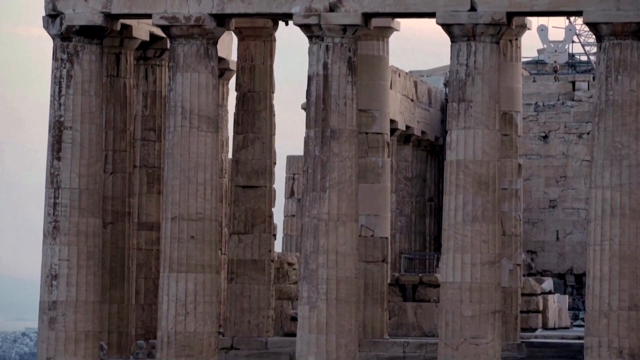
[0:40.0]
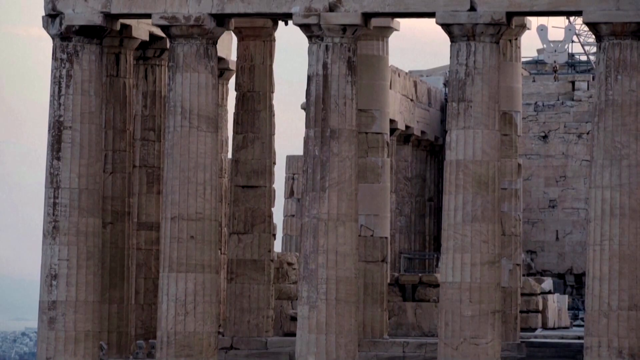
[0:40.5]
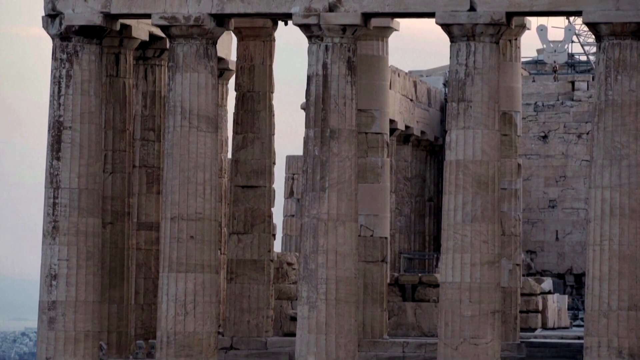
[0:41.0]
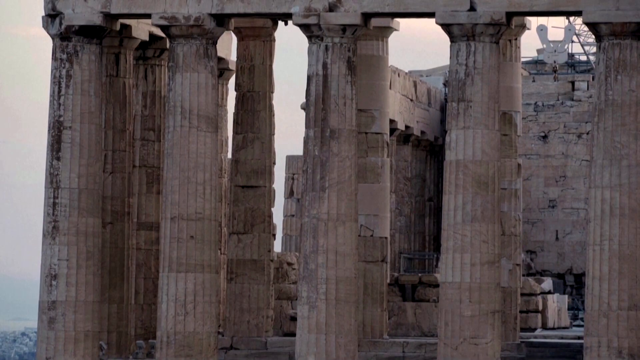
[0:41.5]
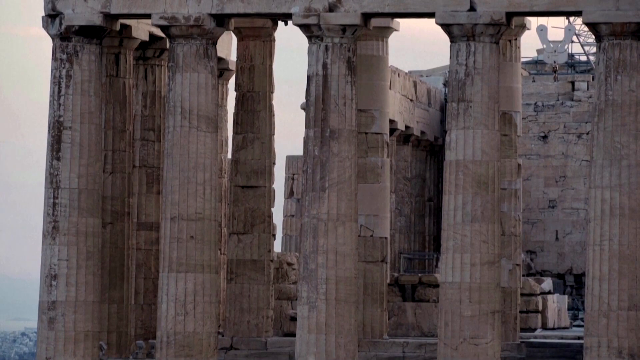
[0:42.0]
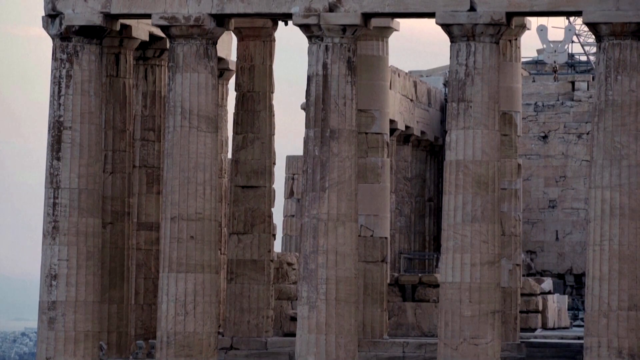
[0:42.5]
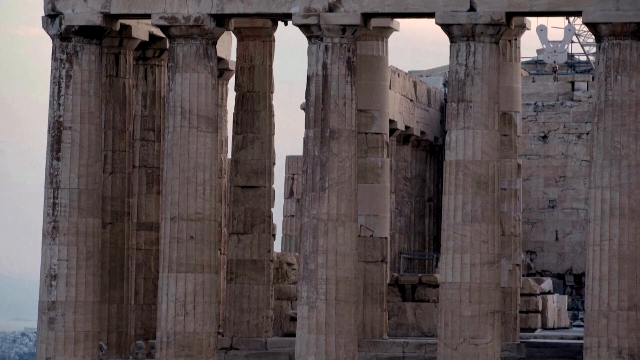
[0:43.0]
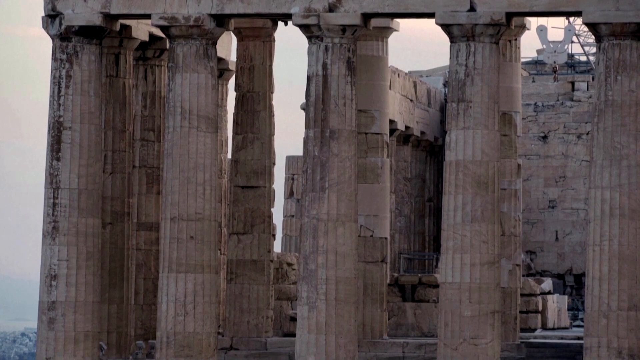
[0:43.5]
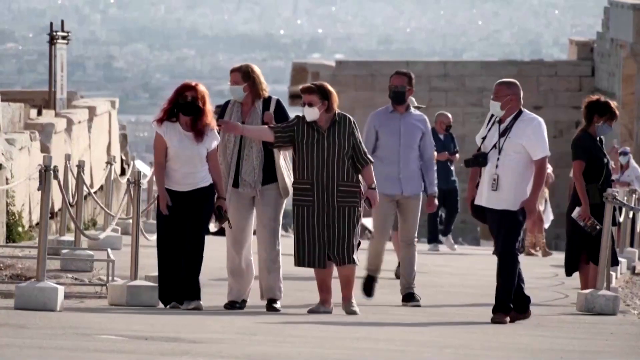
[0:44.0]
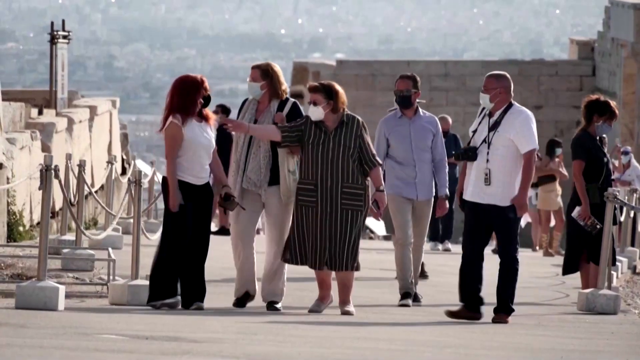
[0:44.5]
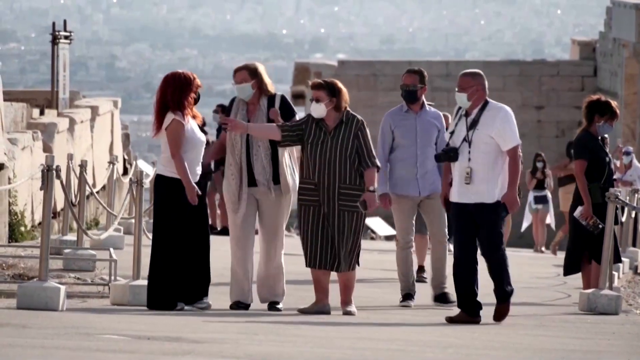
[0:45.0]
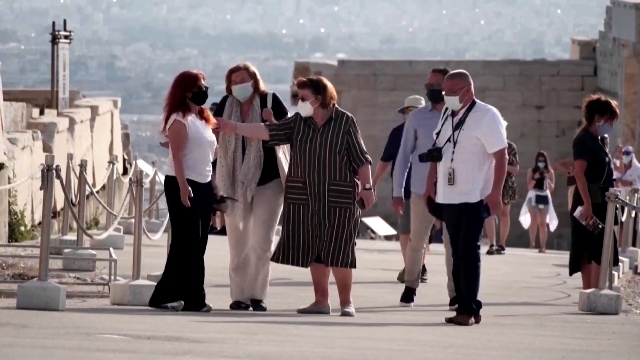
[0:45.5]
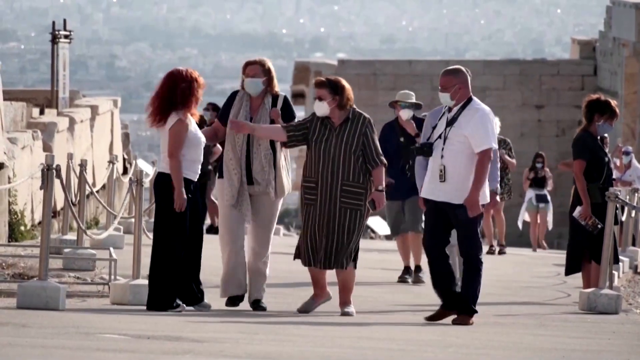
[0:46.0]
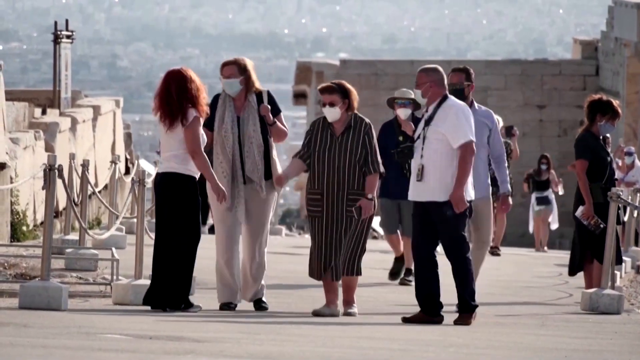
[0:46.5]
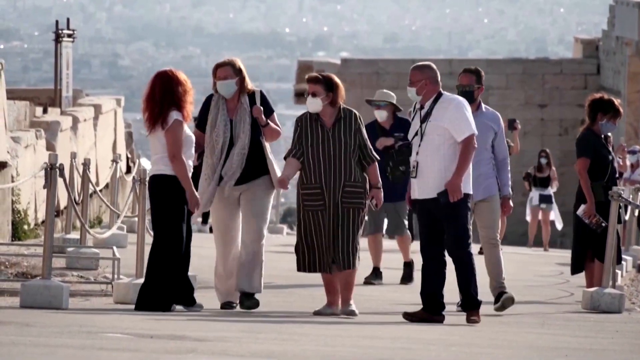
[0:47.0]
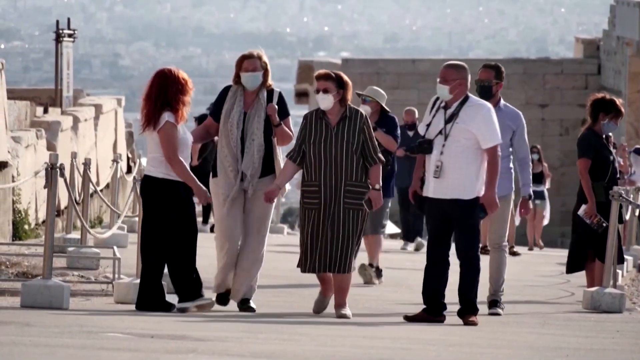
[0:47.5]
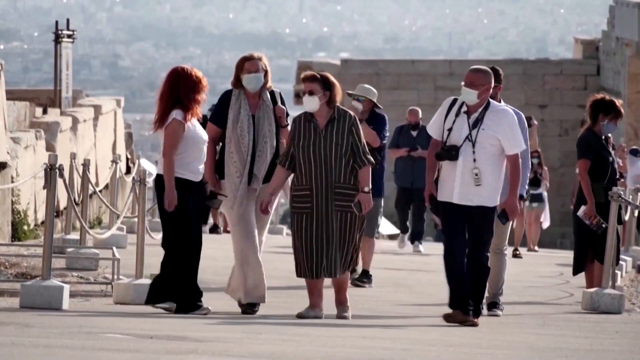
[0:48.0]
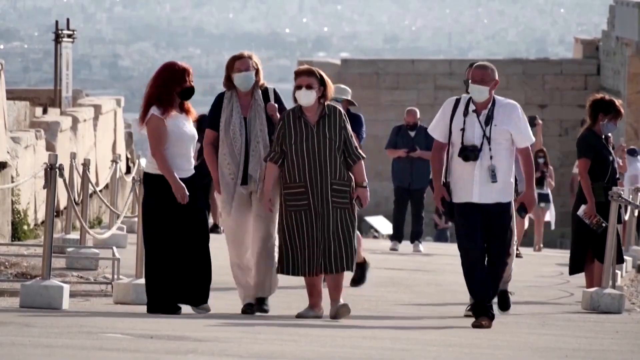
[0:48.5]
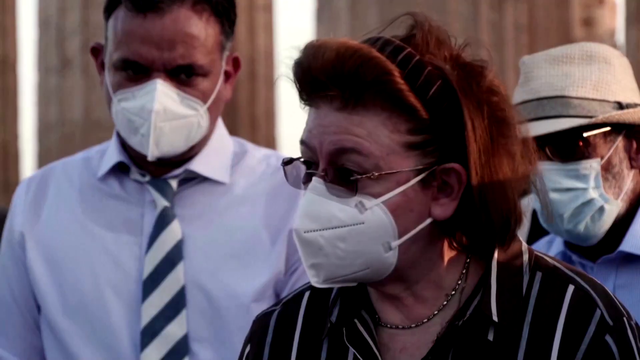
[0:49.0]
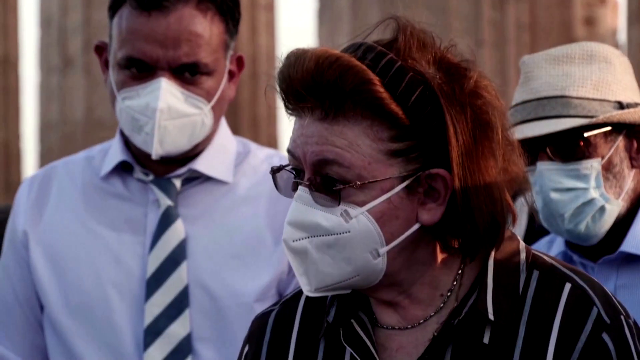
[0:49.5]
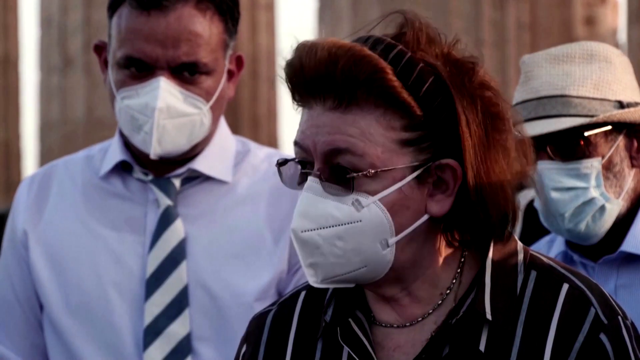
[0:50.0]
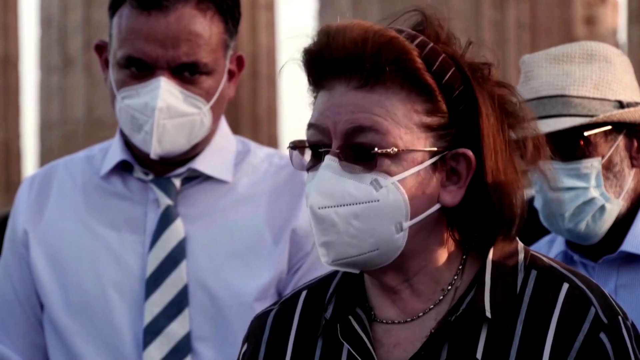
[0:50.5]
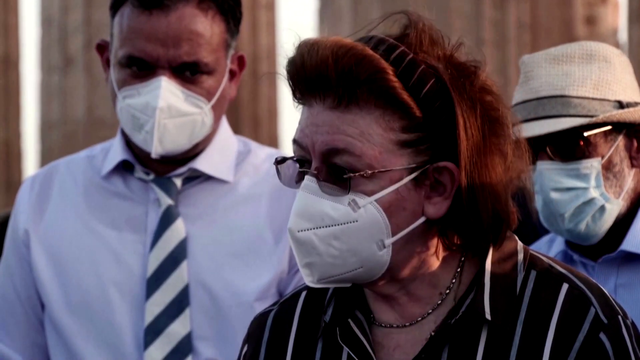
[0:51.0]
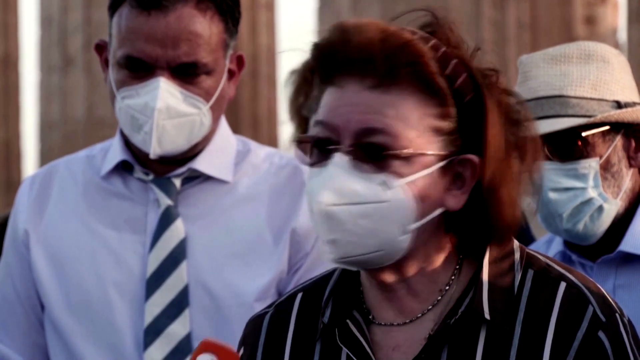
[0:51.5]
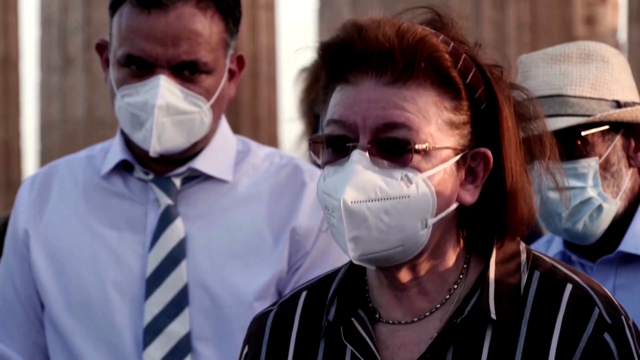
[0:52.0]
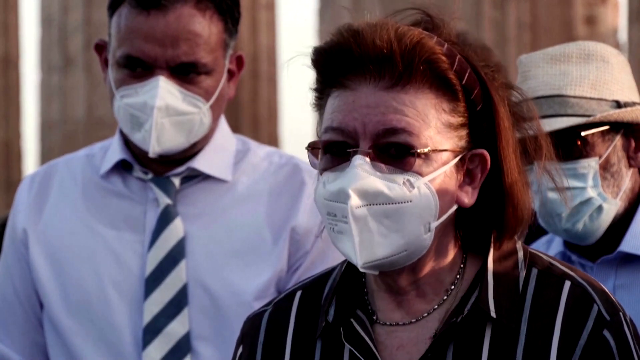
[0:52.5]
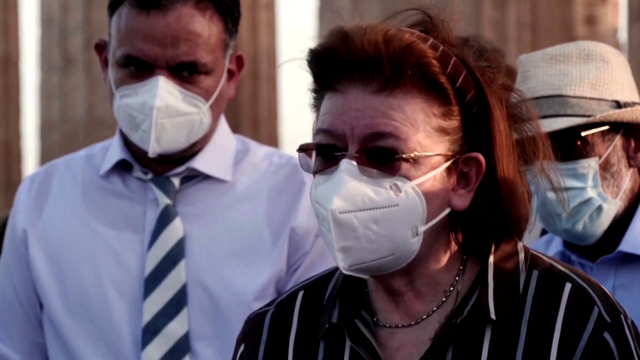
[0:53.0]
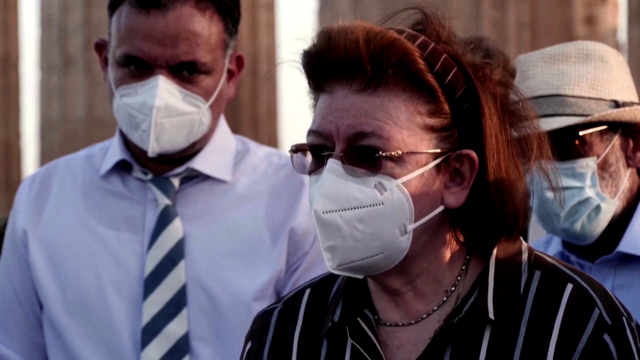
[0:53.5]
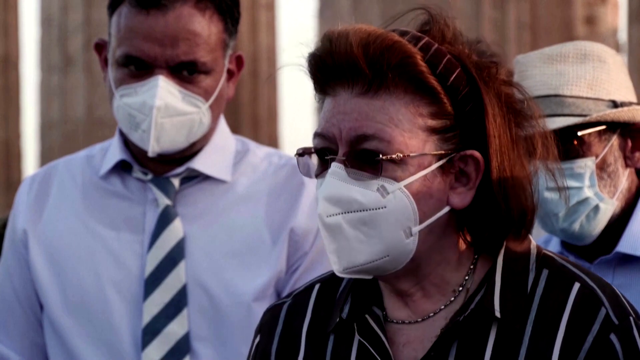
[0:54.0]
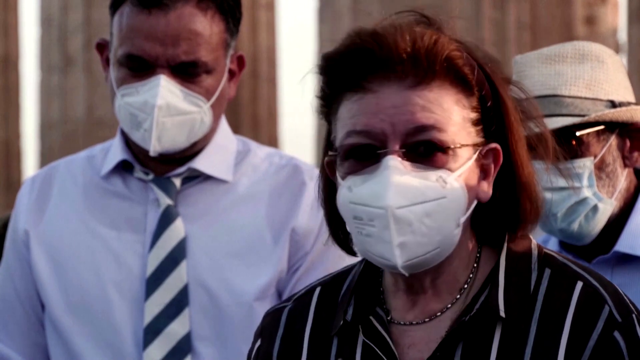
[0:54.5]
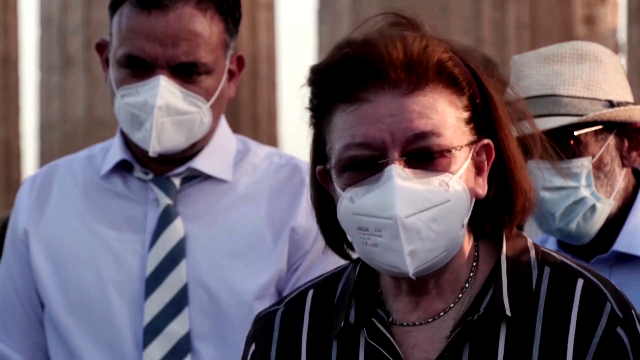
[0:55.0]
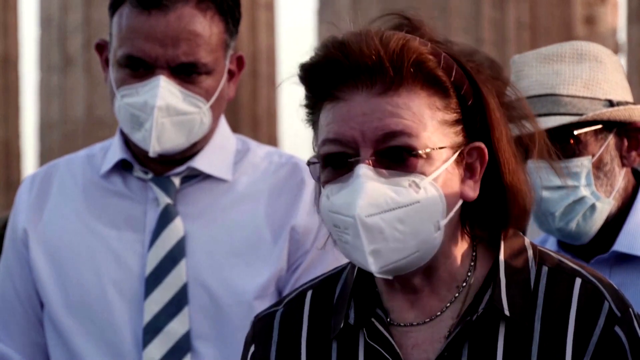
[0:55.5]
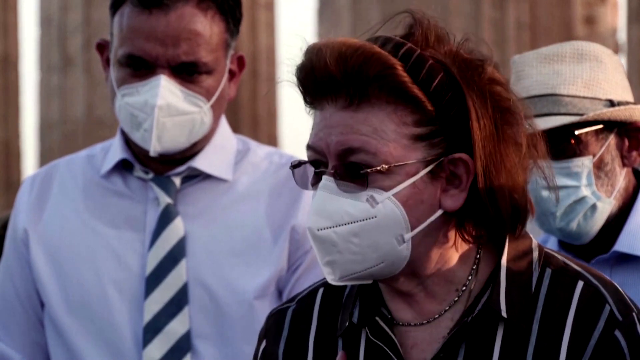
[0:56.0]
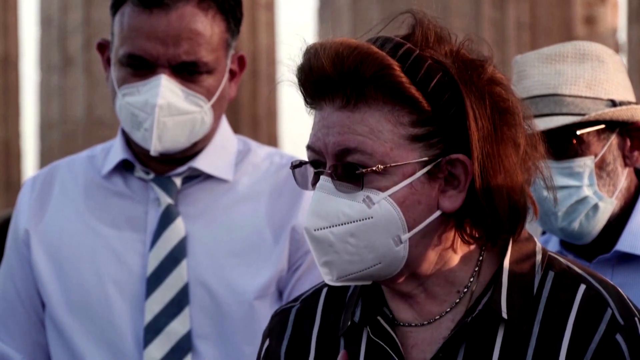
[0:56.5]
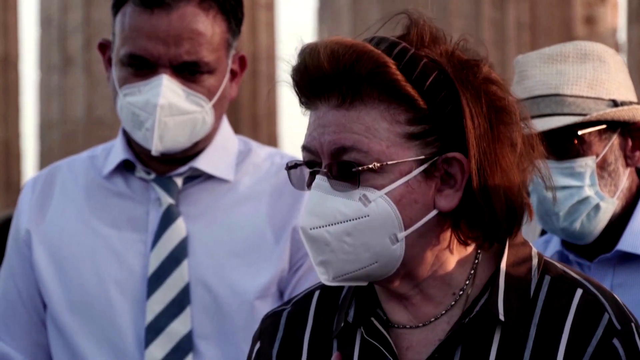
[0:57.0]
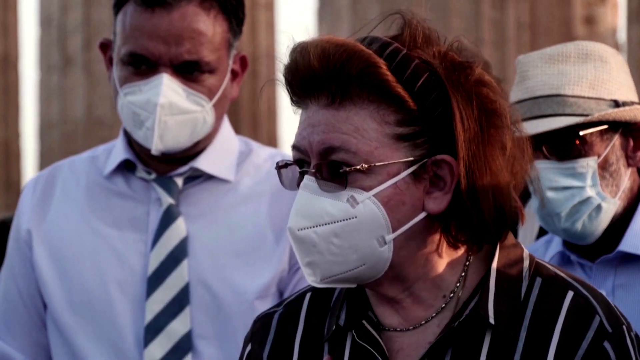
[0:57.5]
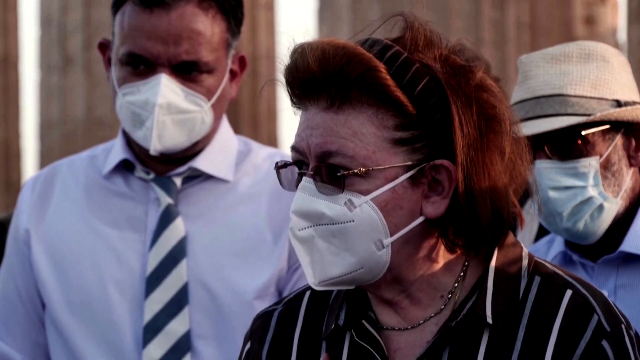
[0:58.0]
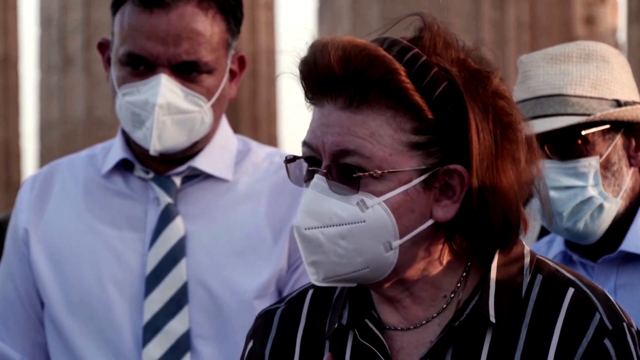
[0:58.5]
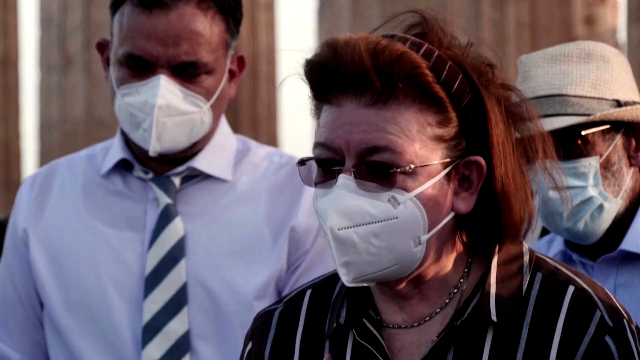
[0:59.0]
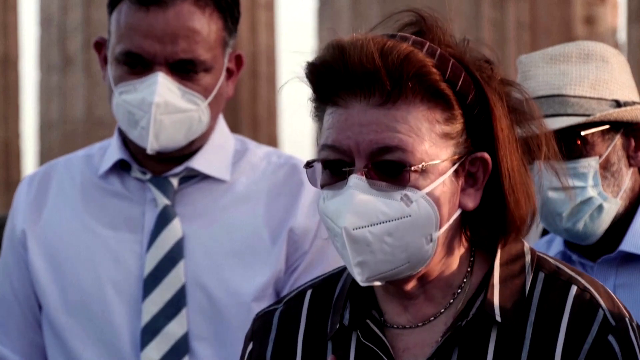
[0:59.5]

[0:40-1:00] At the same building, a group of people appears, all wearing N95 masks, so this is probably during the COVID-19 pandemic. The individuals walk together in casual business attire, come up to speak to each other, and walk and talk. There is a man with a camera. A quick shot shows one of the women talking while everyone else in the group listens. Whoever is filming seems to be videotaping her talk, suggesting she may have some connection to the architectural, archaeological site, possibly as a professor, an archaeologist or an art history professor, or someone involved in the renovations. She seems to be the focus of the video.